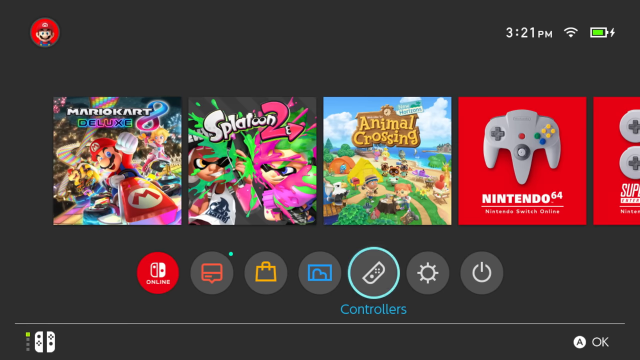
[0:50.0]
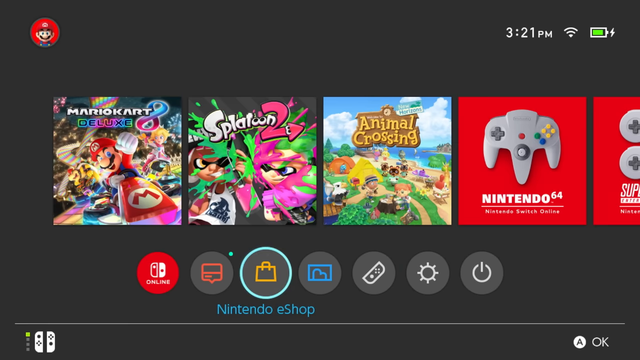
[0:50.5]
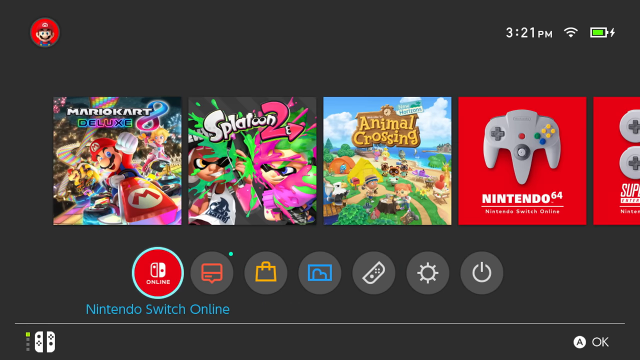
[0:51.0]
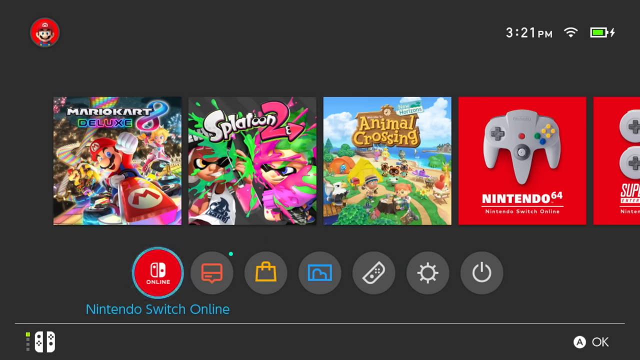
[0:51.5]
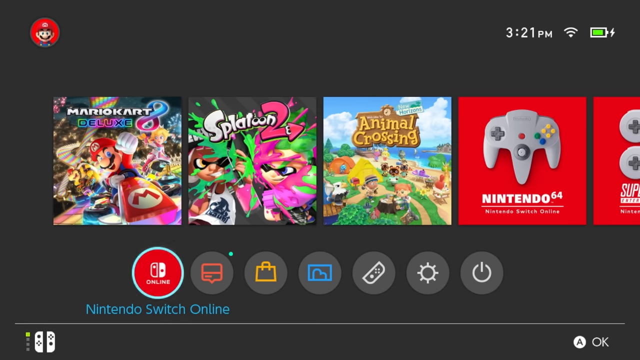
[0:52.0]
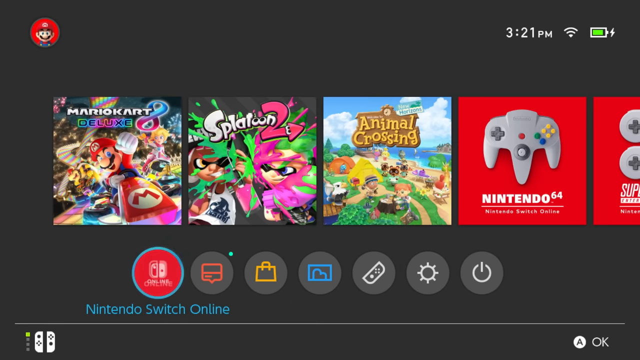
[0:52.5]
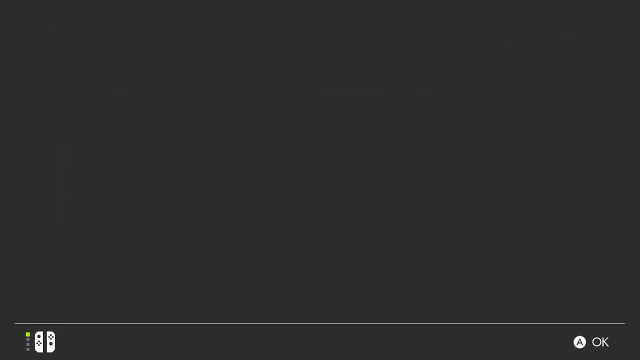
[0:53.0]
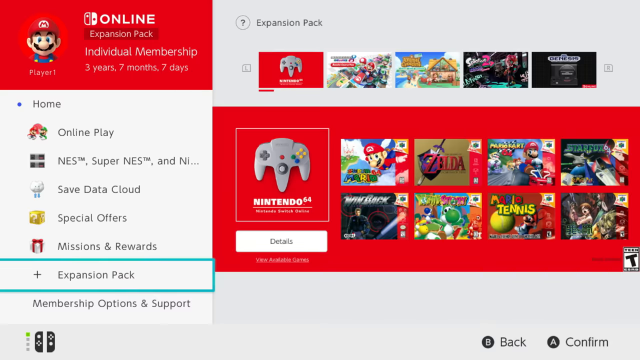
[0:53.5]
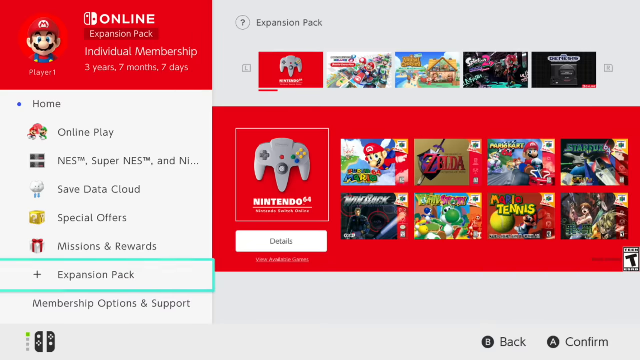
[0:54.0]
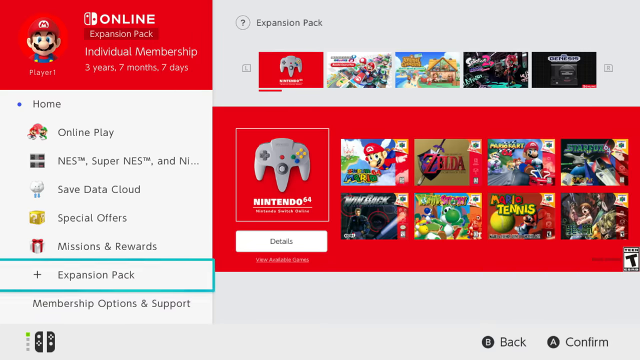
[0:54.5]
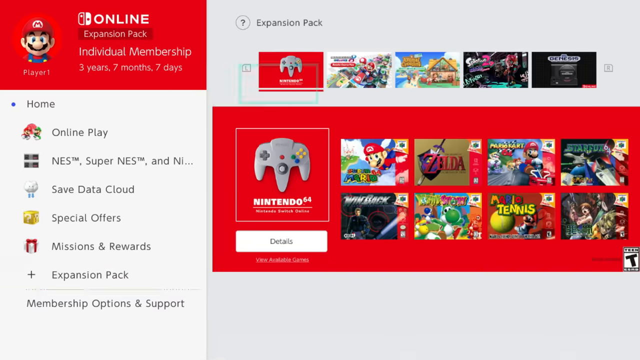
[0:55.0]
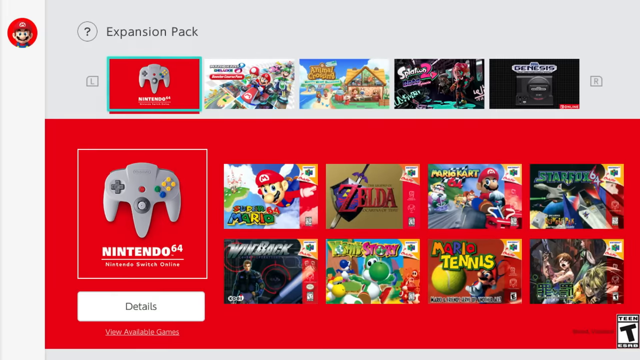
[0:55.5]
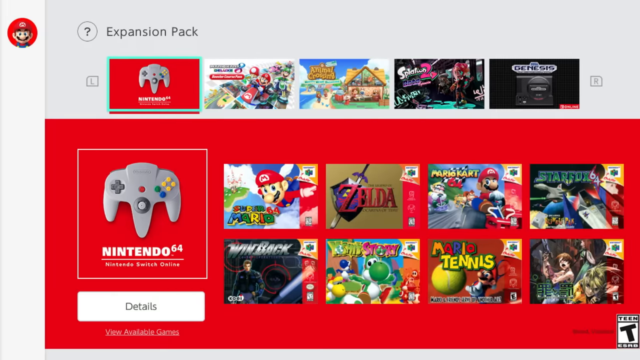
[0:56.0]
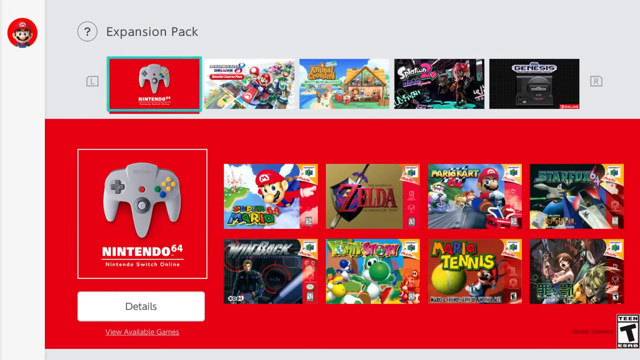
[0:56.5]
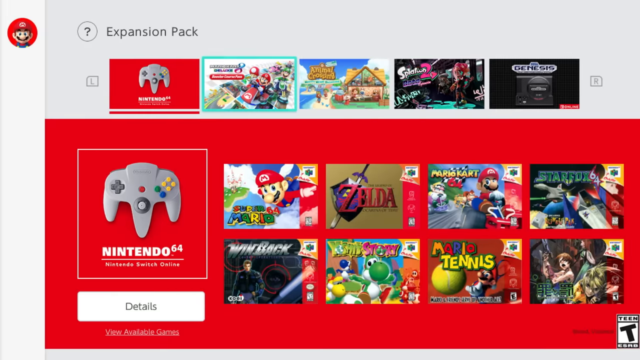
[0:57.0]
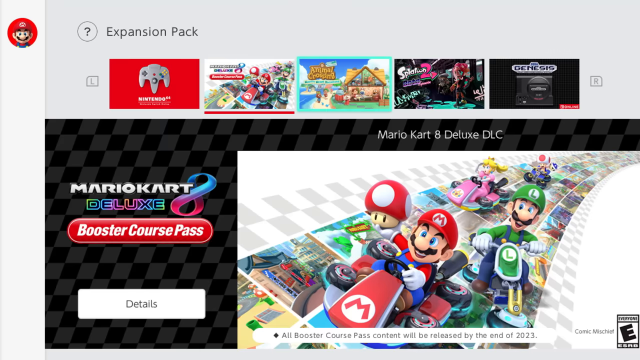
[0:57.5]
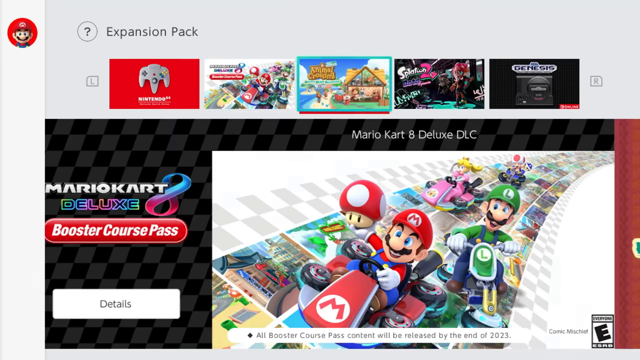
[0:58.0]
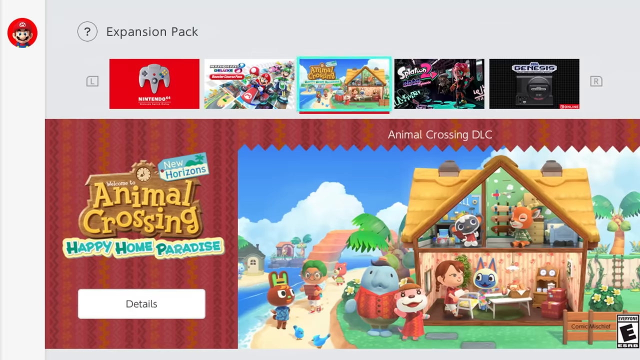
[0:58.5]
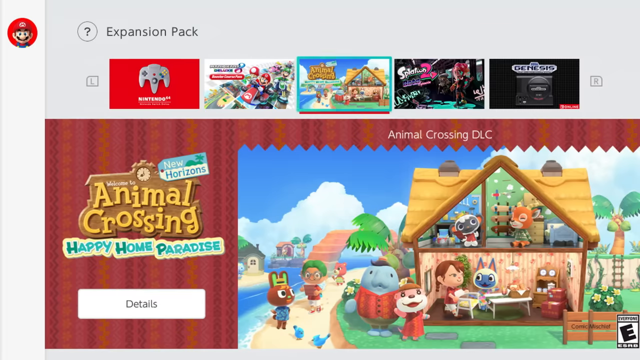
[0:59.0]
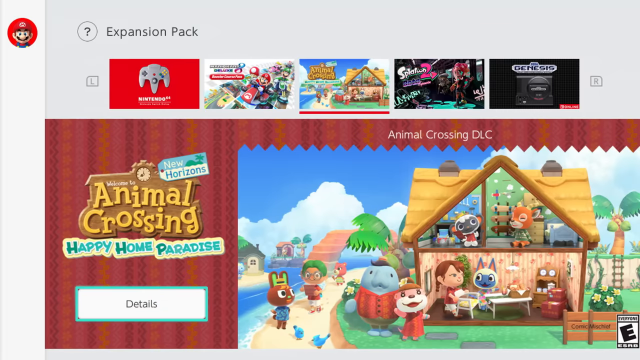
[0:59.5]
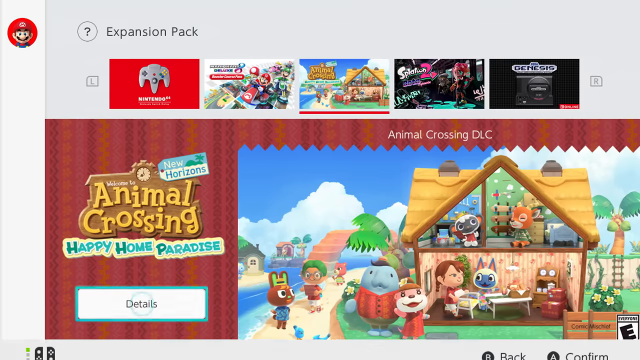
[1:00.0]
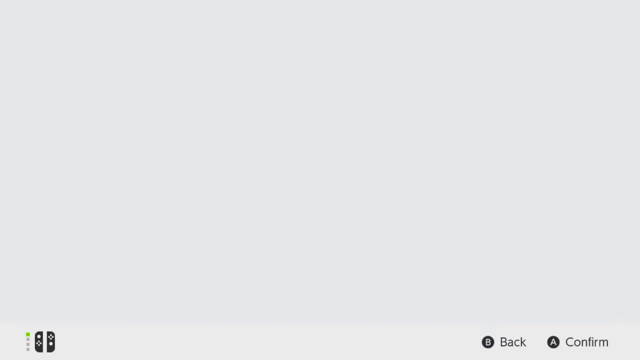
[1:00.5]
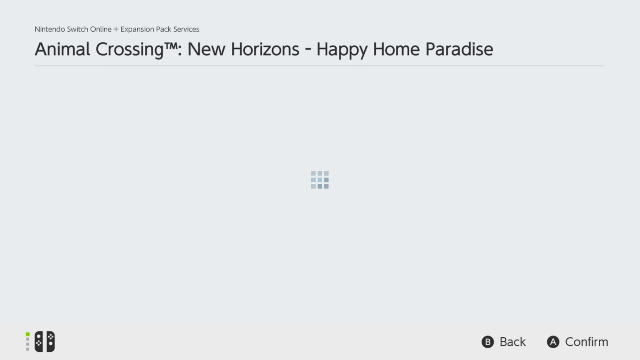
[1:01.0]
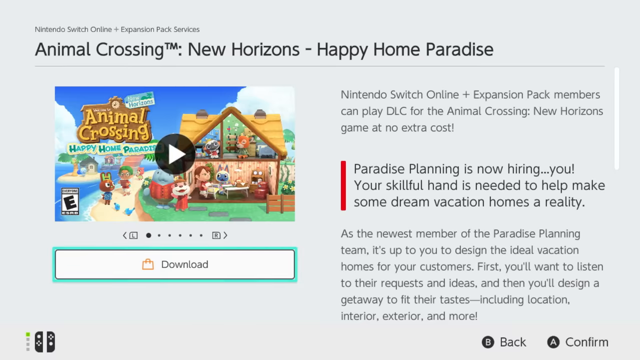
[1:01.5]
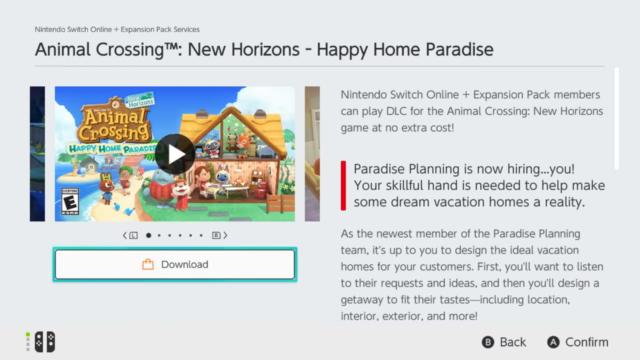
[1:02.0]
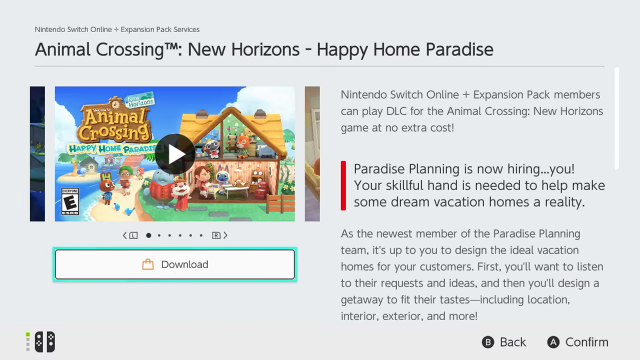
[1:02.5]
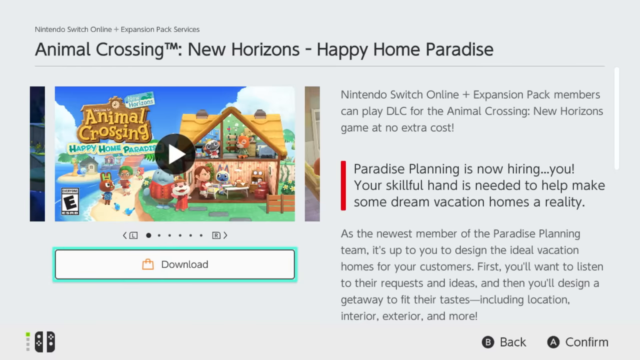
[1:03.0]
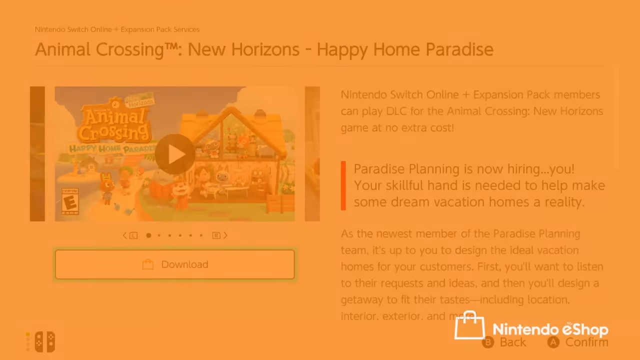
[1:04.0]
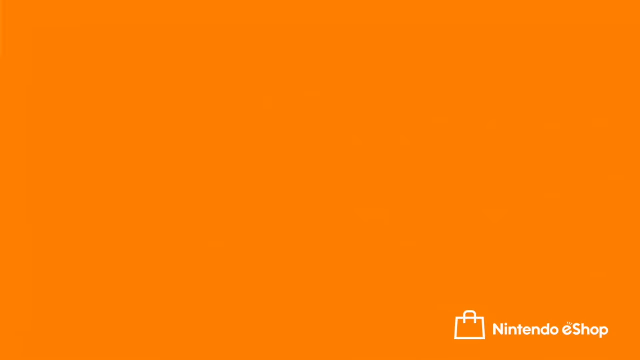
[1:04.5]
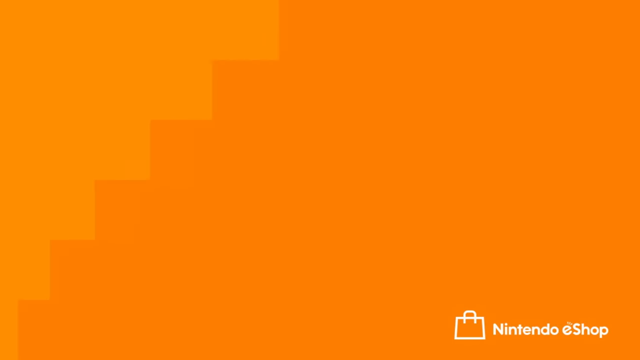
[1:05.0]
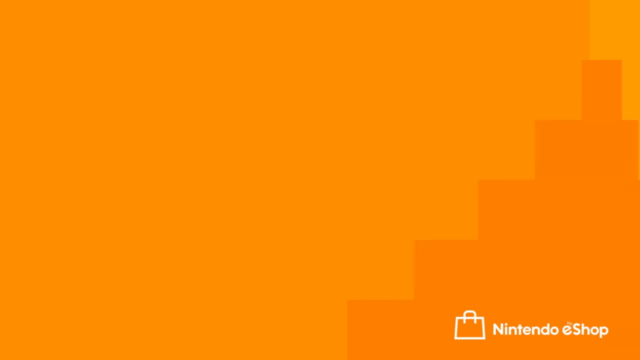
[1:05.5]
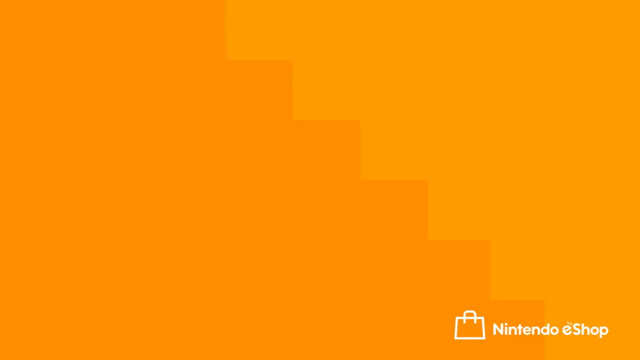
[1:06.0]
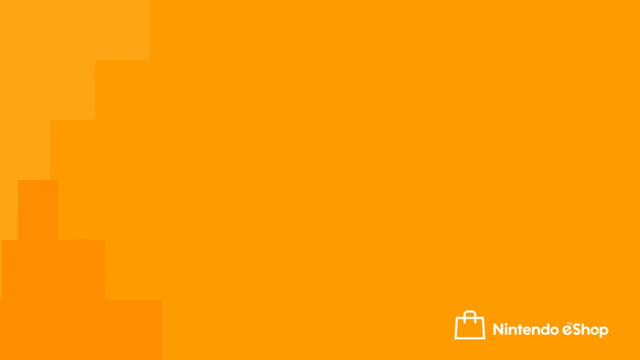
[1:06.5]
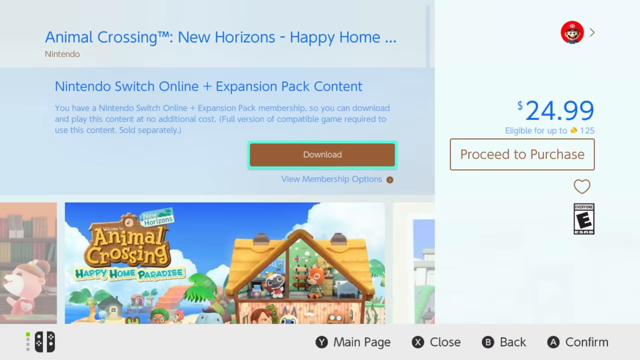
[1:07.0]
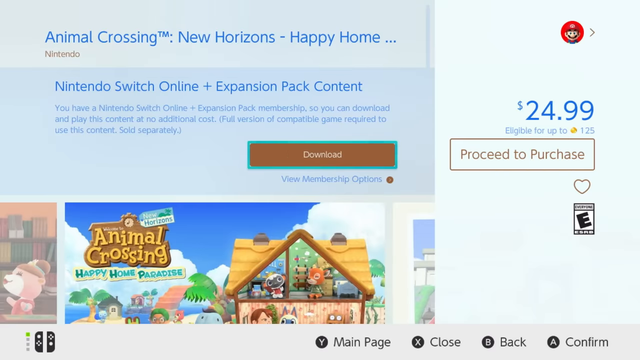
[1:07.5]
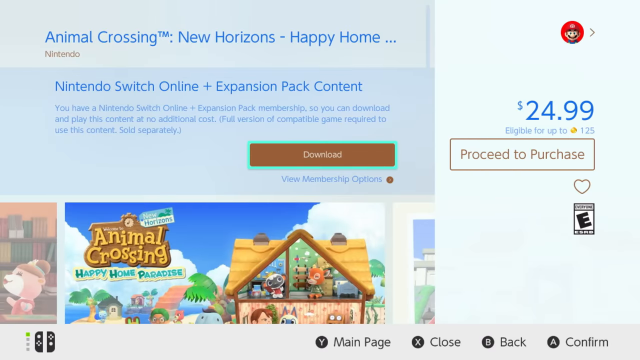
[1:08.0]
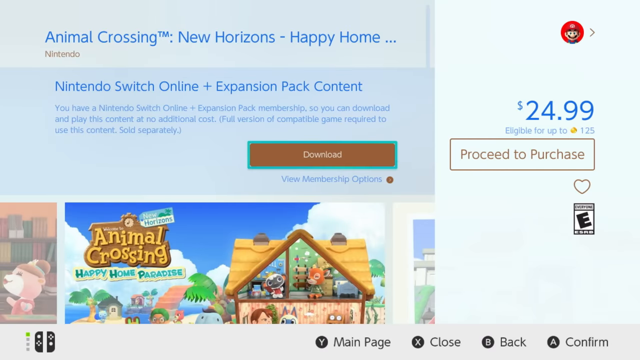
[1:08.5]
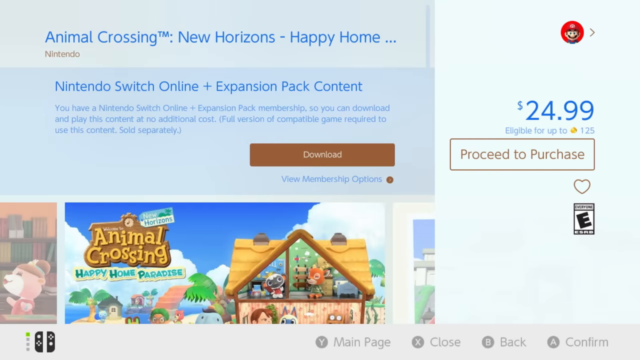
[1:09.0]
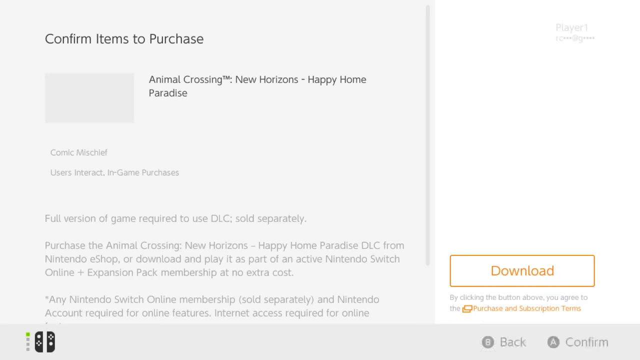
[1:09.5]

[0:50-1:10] The different video games available for selection are shown. The time is 3:21 p.m., Wi-Fi is enabled, and the battery is charging. The games include Mario Kart Deluxe, Splatoon 2 with a brightly colored cover, Animal Crossing, and Nintendo 64. Controllers is selected. Switching over to Nintendo Switch Online, the online expansion pack appears, with a character of Mario as the user searches through and makes a selection. Animal Crossing New Horizons, a $24.99 game, is being downloaded. The selection menu of games returns, showing Mario, Zelda, Mario Kart, Mario Tennis, and many other selectable games. The details for Animal Crossing New Horizons Happy Home Paradise are opened. The video then cycles back to the controllers, and the online selection is made.